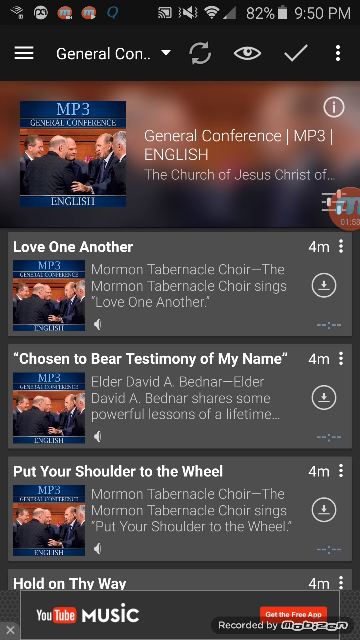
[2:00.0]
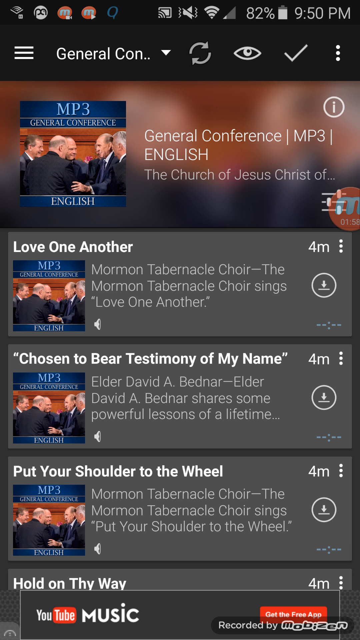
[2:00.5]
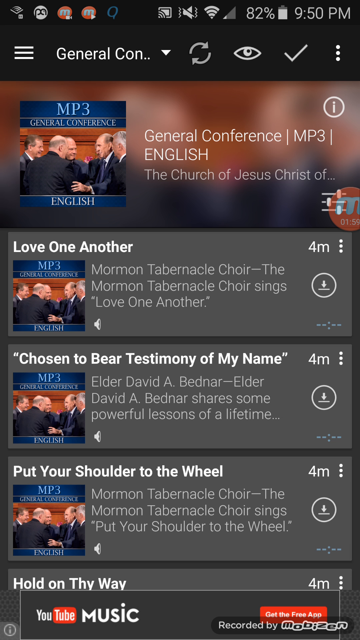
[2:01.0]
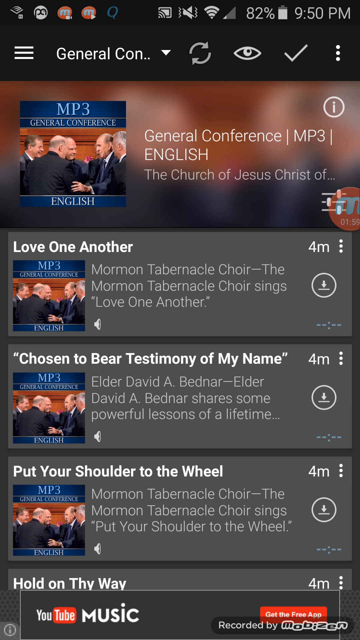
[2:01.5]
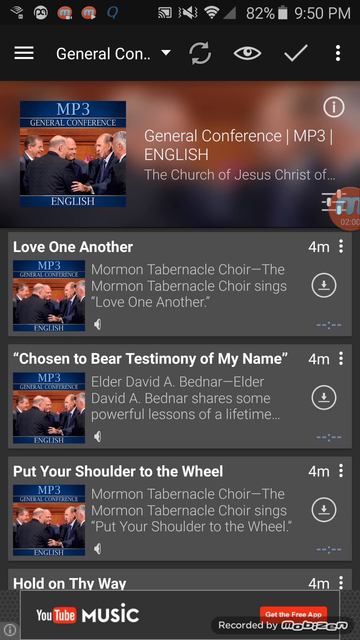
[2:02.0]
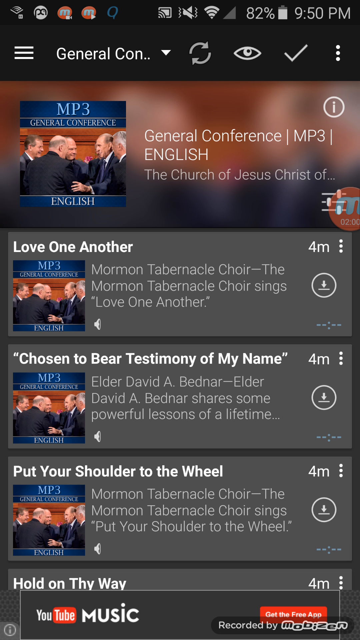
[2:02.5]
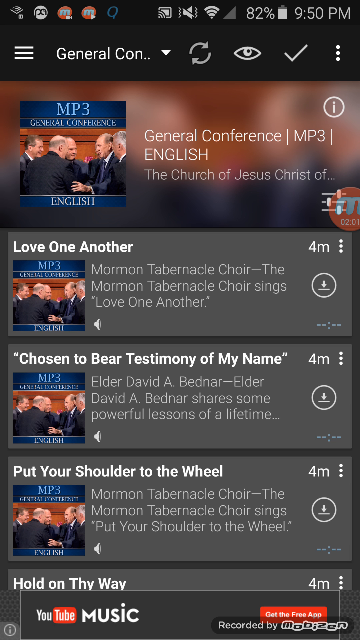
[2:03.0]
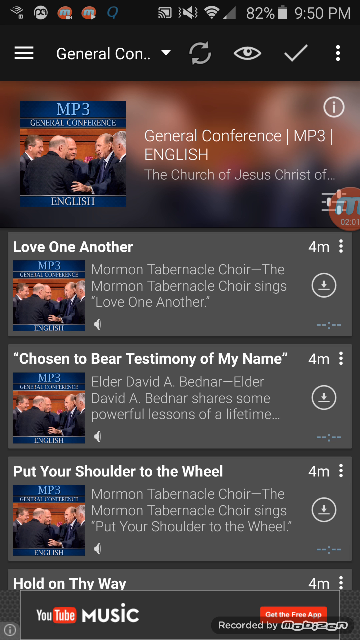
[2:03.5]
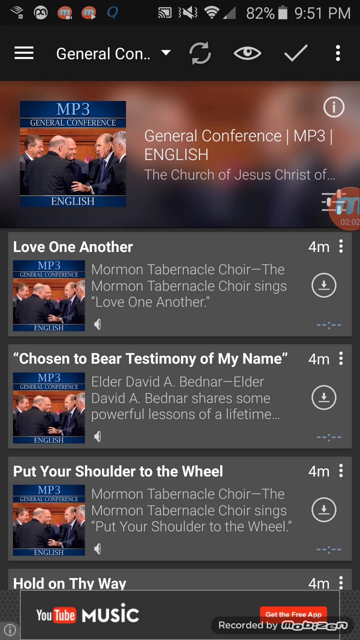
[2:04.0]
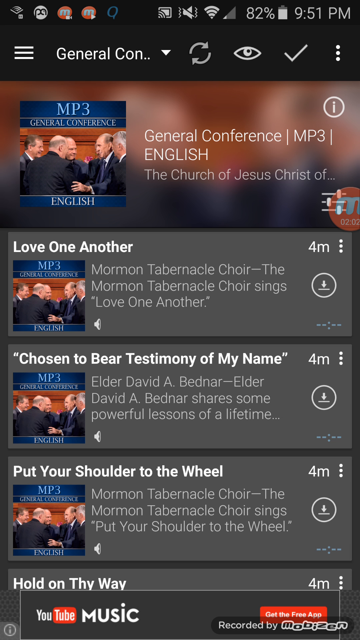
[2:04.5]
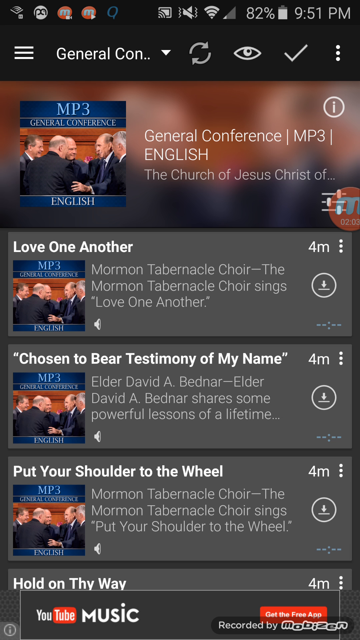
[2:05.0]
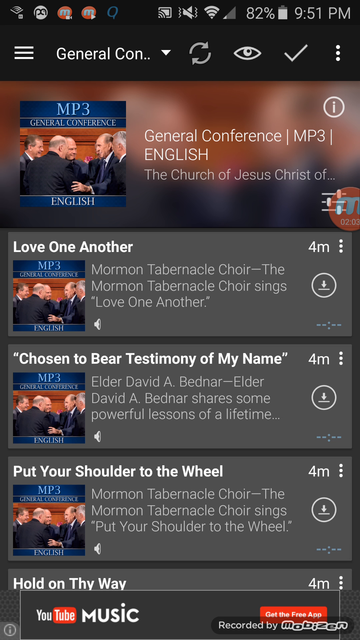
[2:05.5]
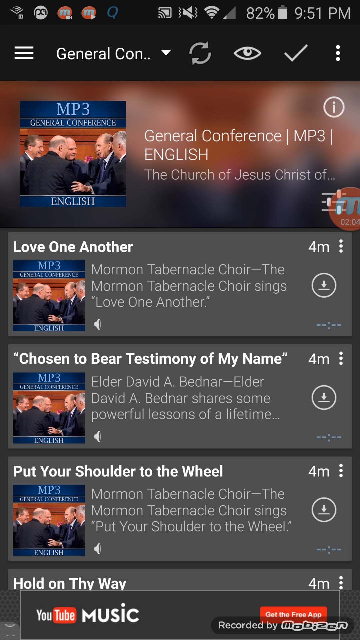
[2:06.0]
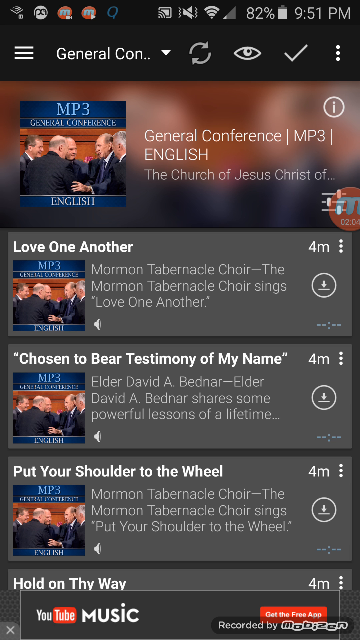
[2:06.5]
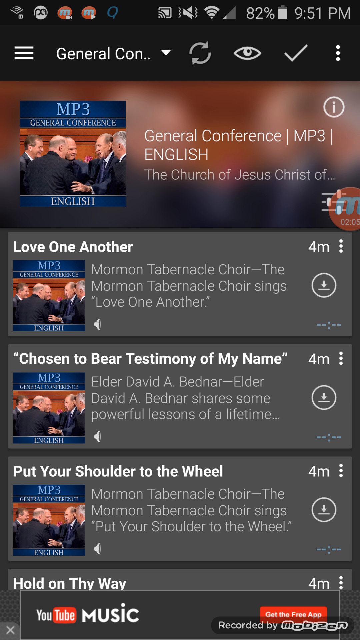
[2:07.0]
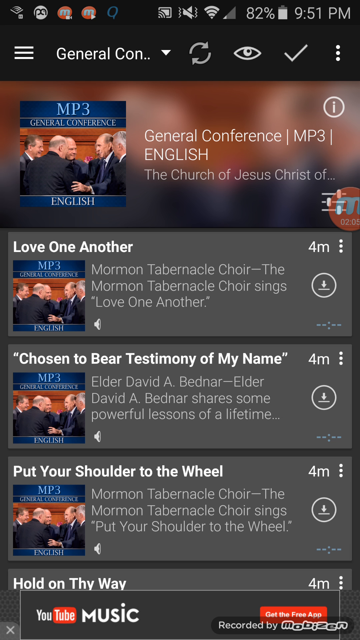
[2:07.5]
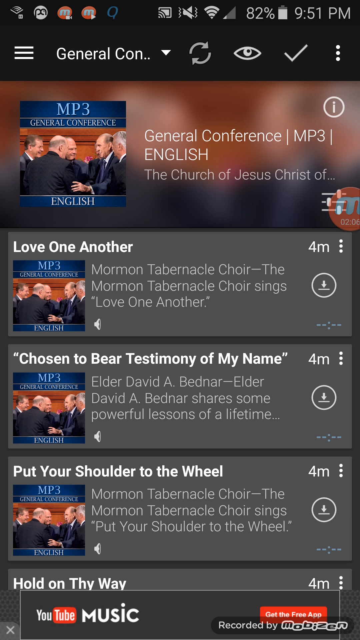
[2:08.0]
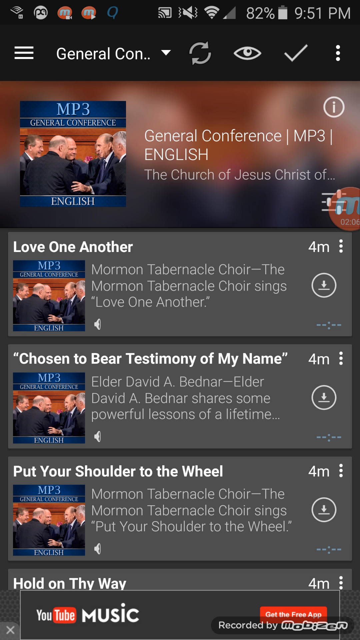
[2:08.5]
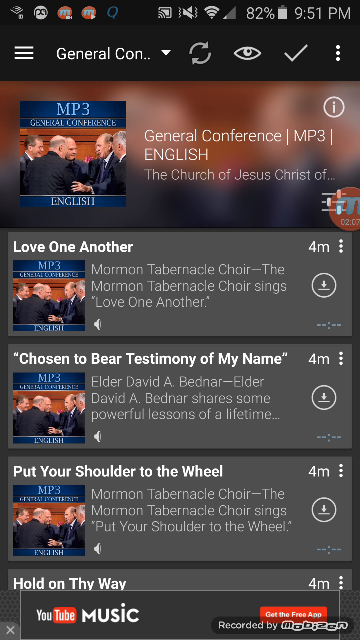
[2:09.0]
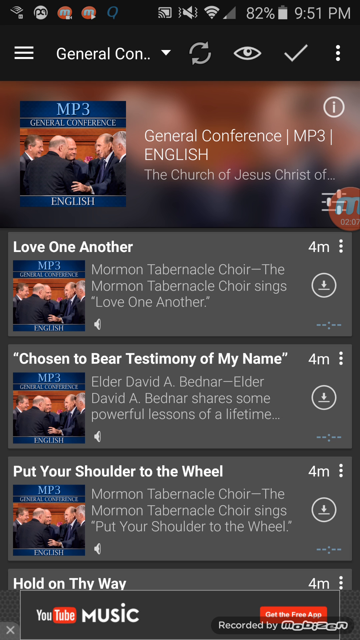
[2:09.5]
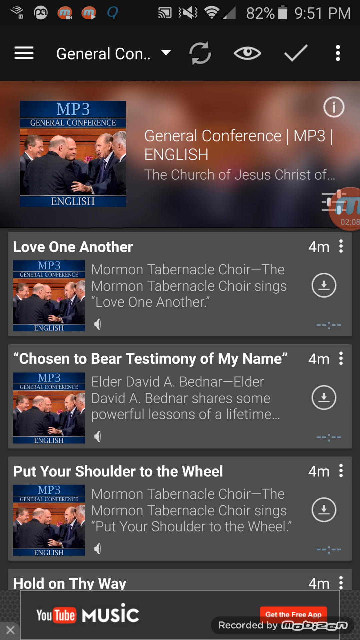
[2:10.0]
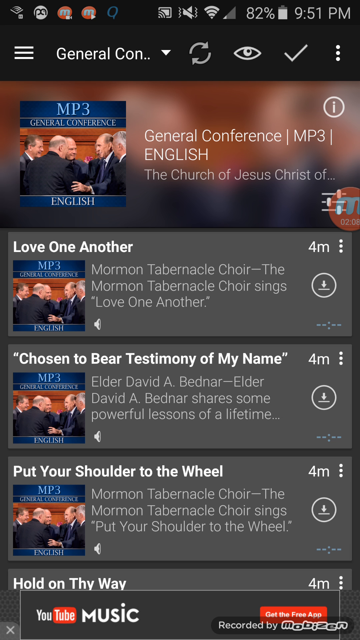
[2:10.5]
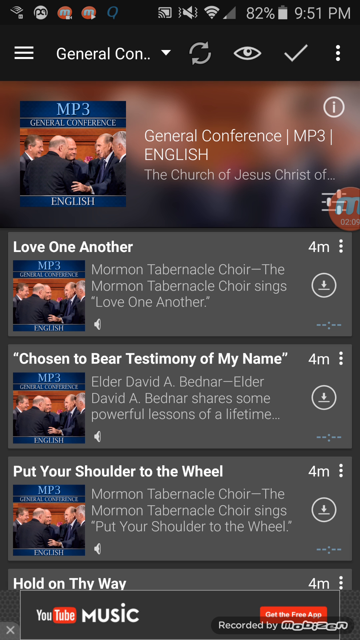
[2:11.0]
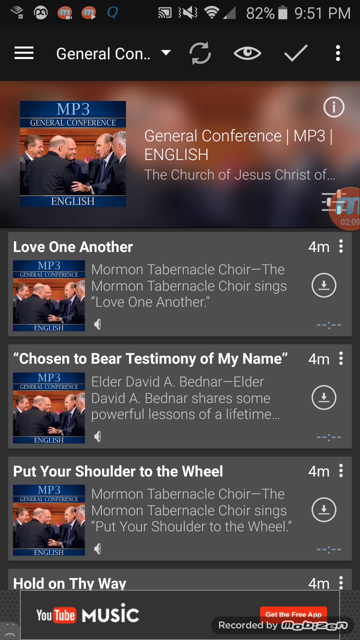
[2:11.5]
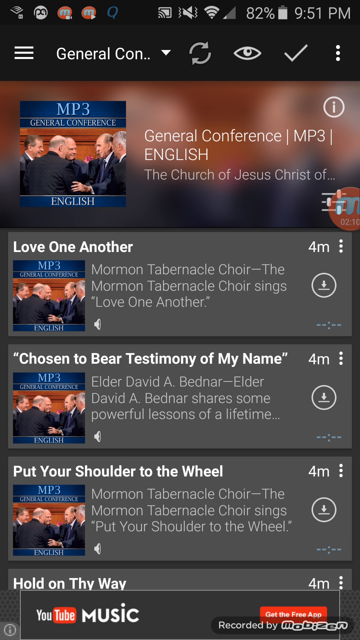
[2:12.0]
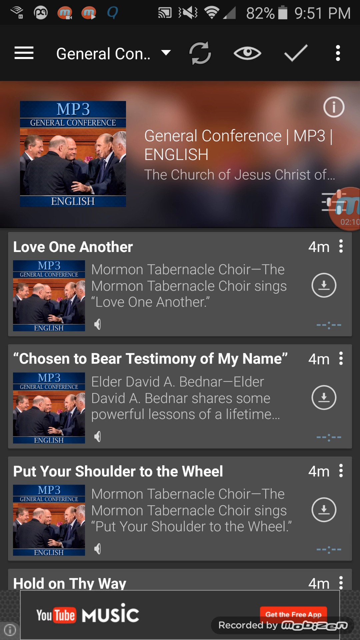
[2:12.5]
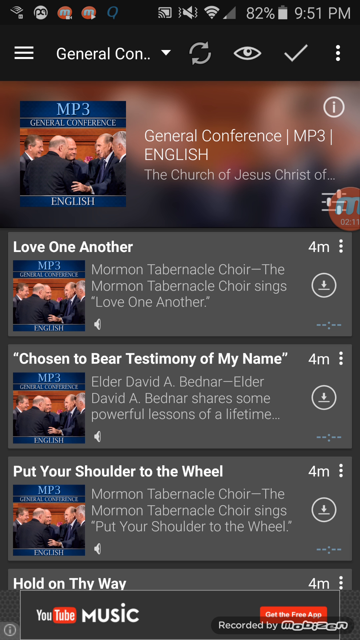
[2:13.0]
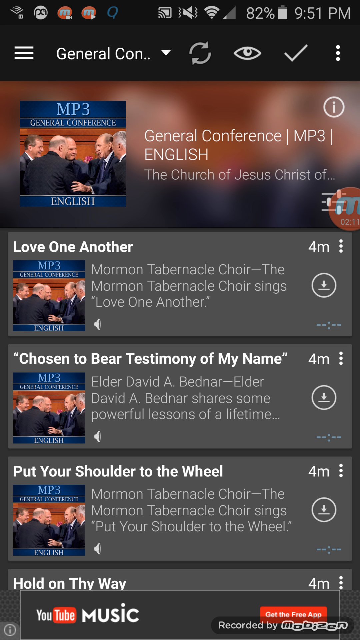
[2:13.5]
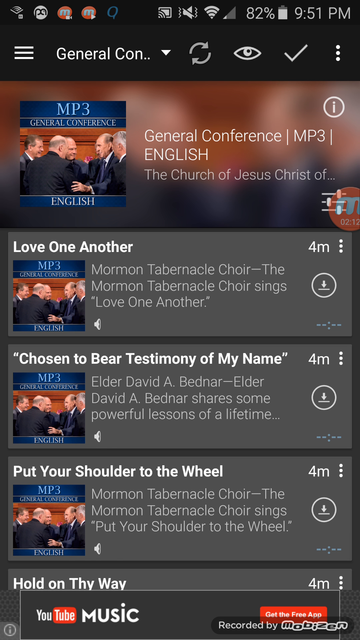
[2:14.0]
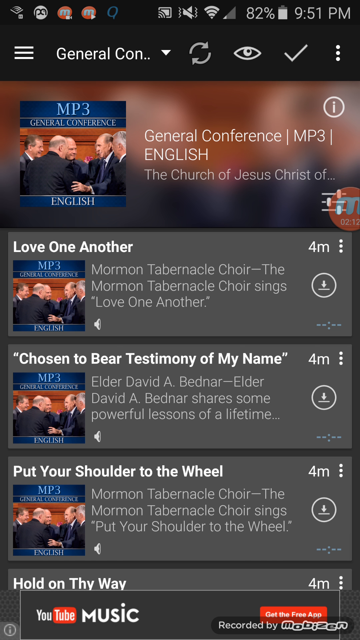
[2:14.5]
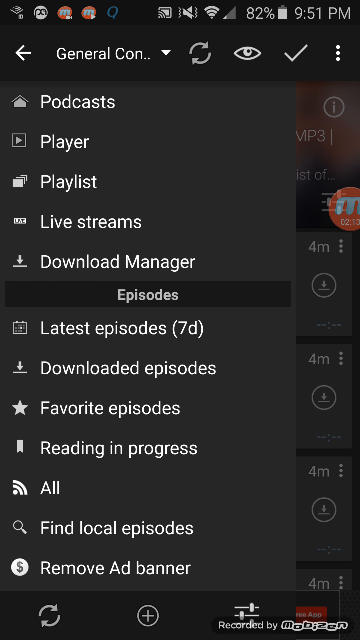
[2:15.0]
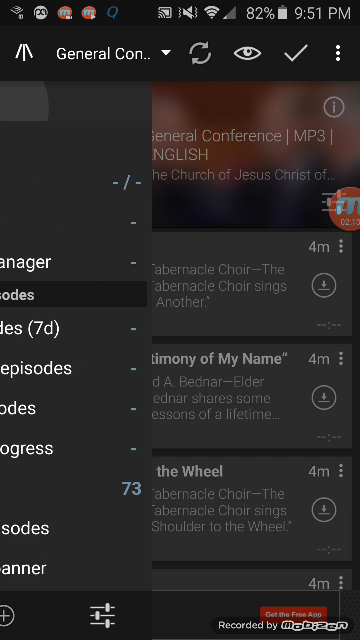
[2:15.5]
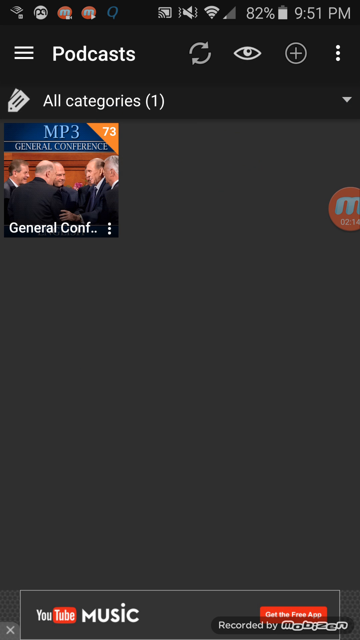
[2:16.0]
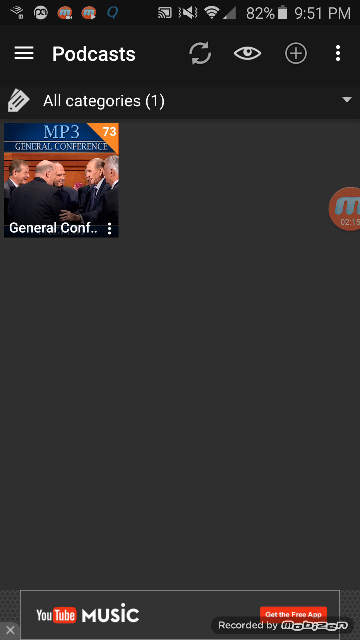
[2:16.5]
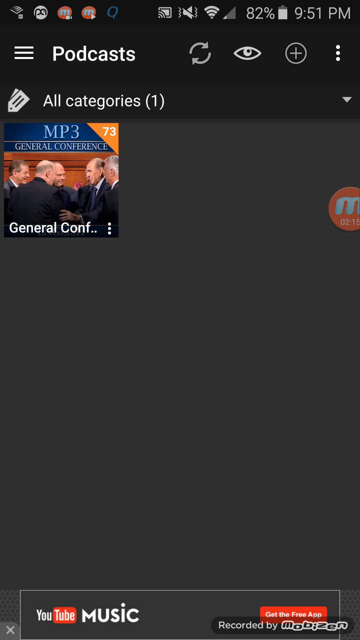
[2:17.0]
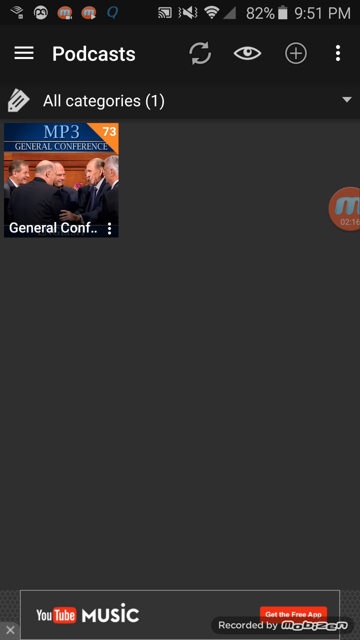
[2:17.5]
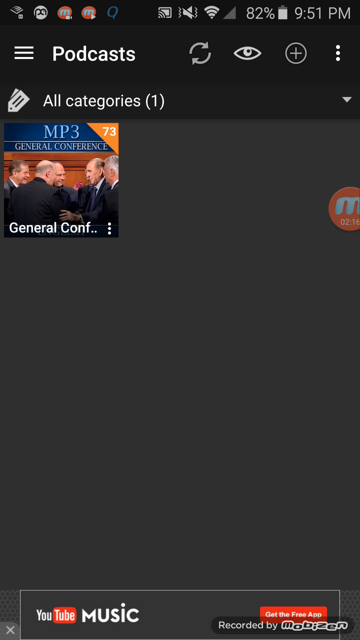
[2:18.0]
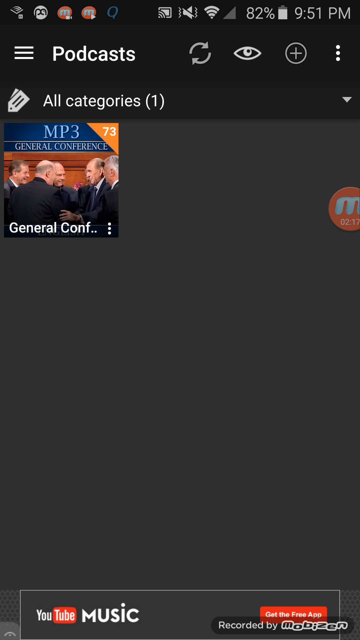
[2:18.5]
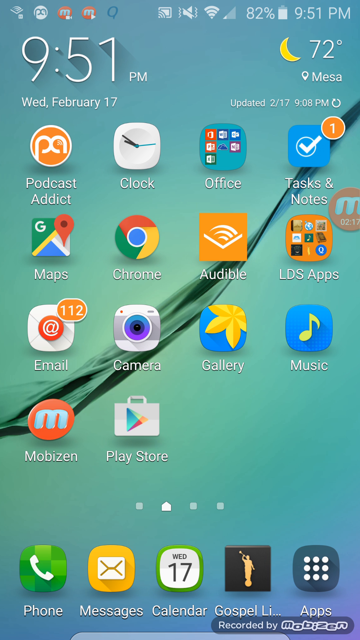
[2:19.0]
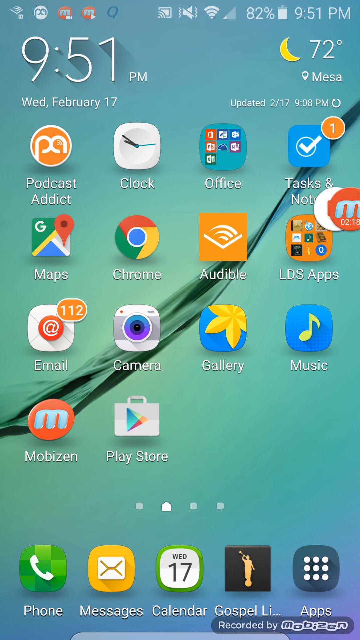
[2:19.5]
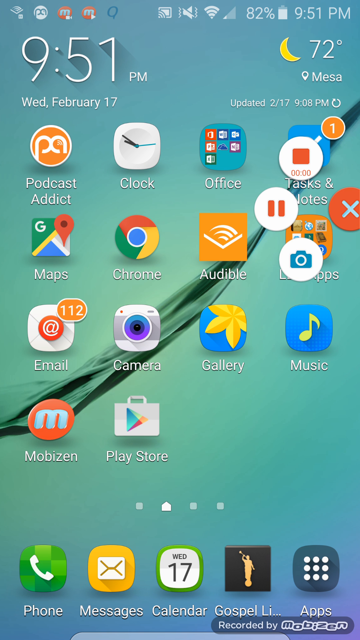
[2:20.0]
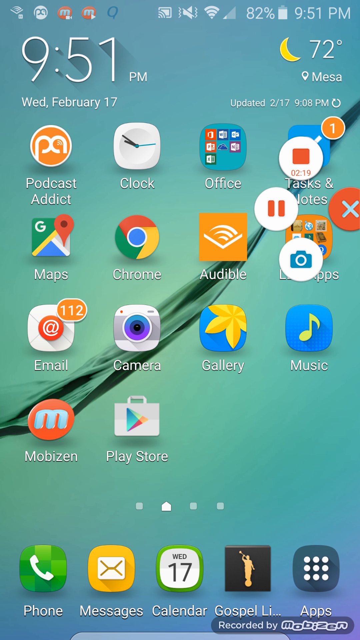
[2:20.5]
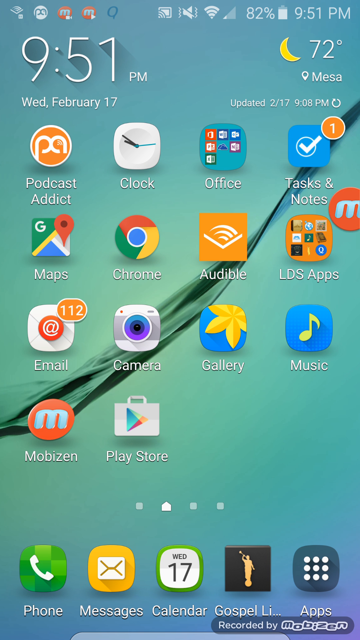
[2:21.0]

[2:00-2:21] The general conference podcast screen shows "general conference mp3" and "English", with "the Church of Jesus Christ" underneath. Below are several podcasts with titles: "love one another", "chosen to bear testimony of my name", "put your shoulder to the wheel", and a fourth, whose title is visible but not its thumbnail, reading "hold on this way" or "hold on my way". Each is four minutes long, shown as "4m" to the right of the icon next to each title, with a download button beneath the "4m". The top of the screen shows 9:50 p.m. and 82% battery. The menu then slides over from the left to the right, into the middle of the screen.